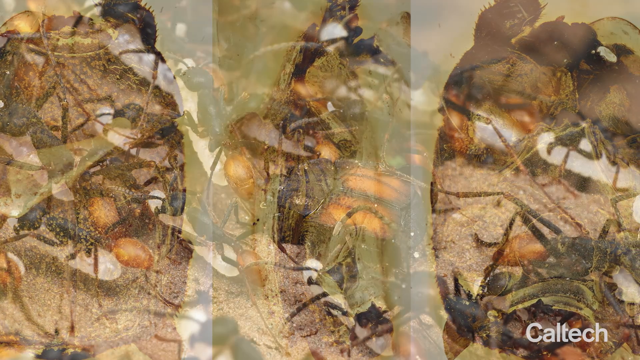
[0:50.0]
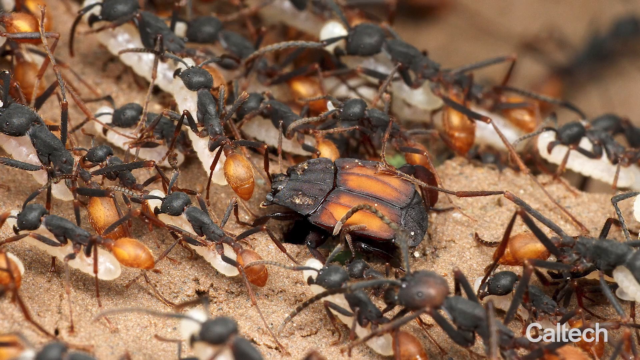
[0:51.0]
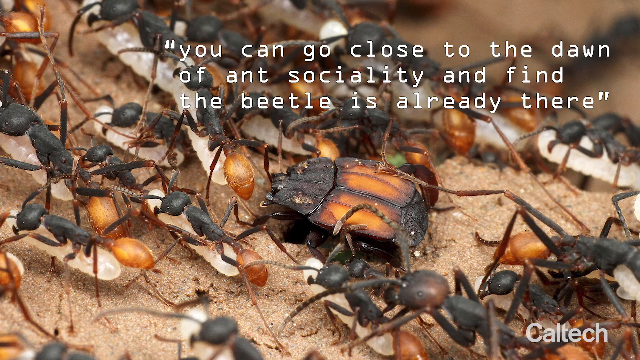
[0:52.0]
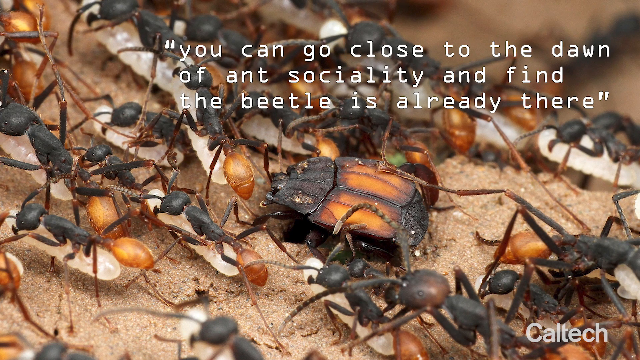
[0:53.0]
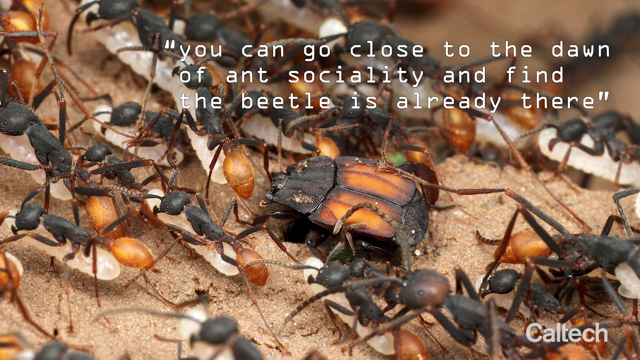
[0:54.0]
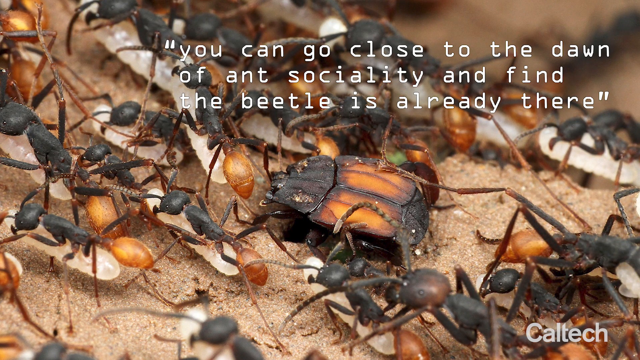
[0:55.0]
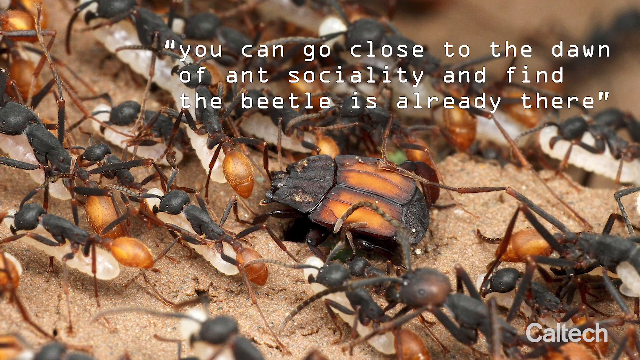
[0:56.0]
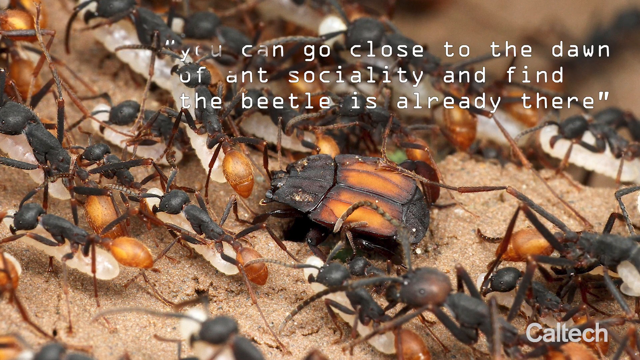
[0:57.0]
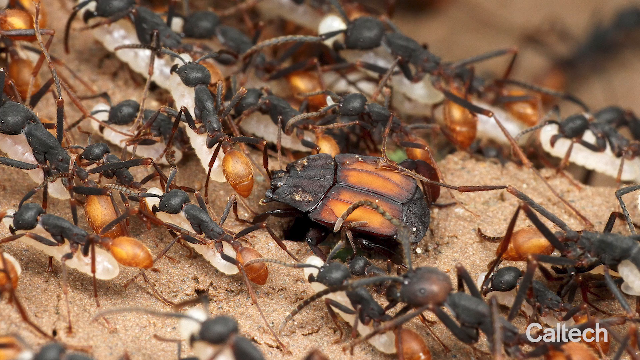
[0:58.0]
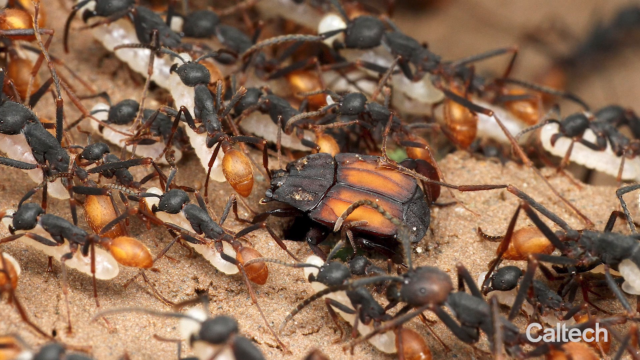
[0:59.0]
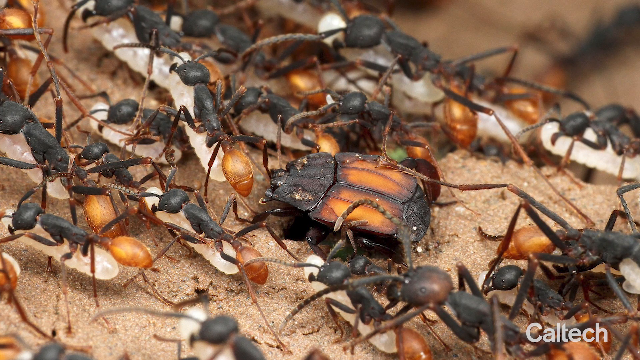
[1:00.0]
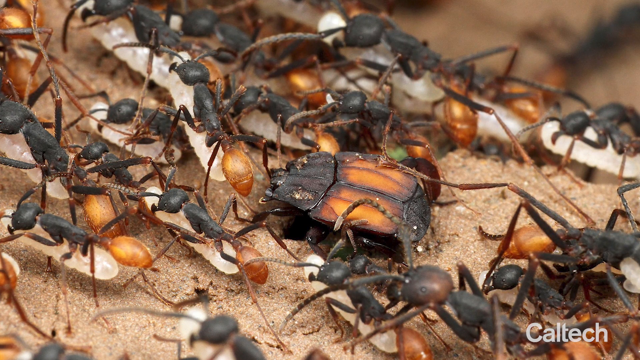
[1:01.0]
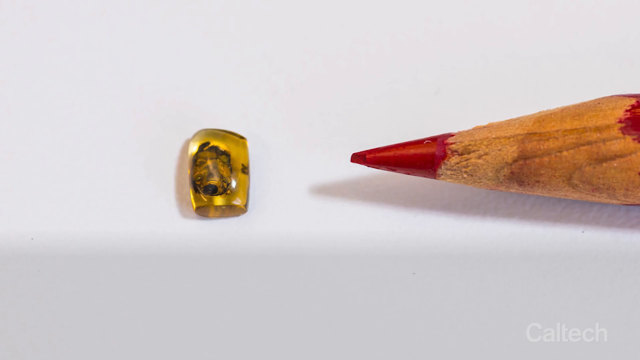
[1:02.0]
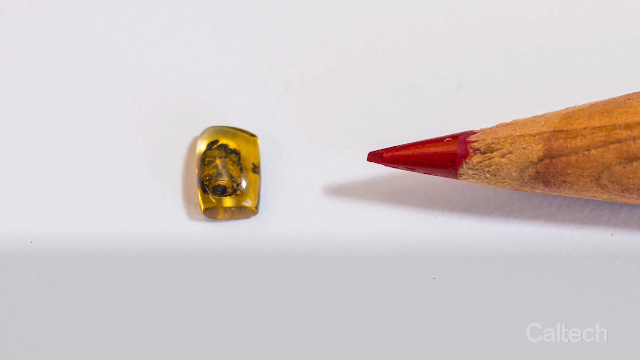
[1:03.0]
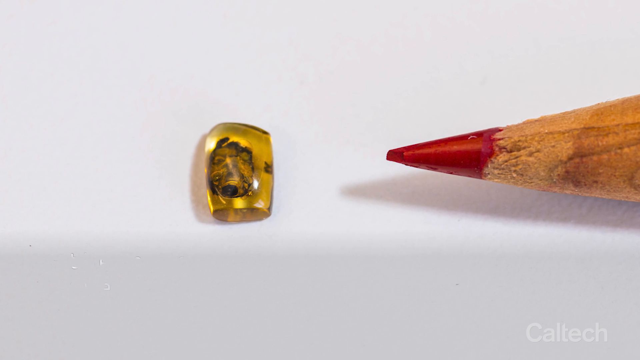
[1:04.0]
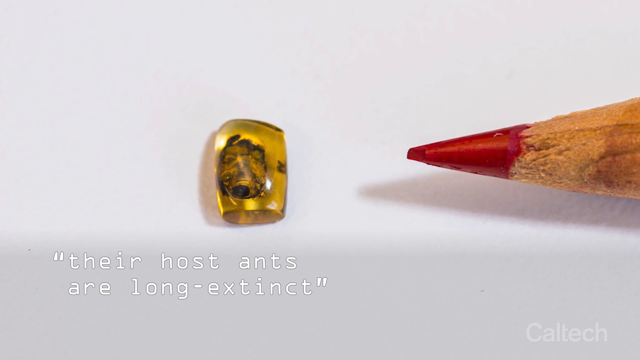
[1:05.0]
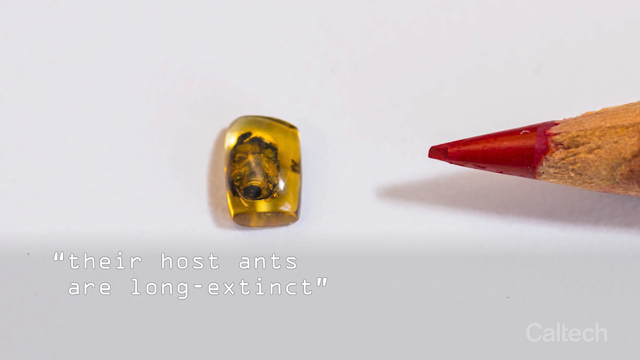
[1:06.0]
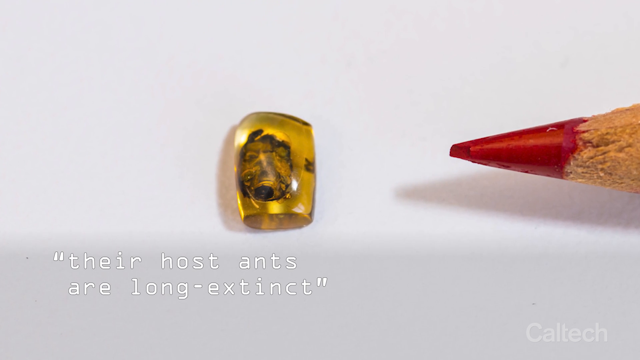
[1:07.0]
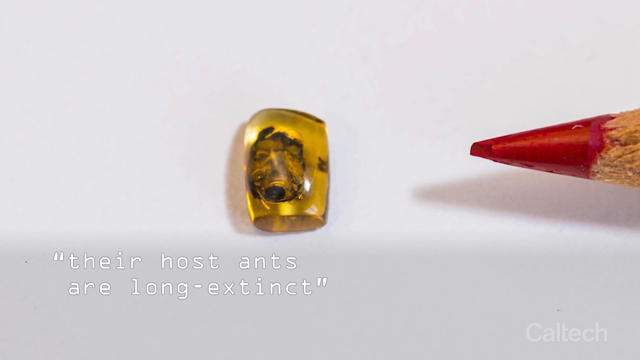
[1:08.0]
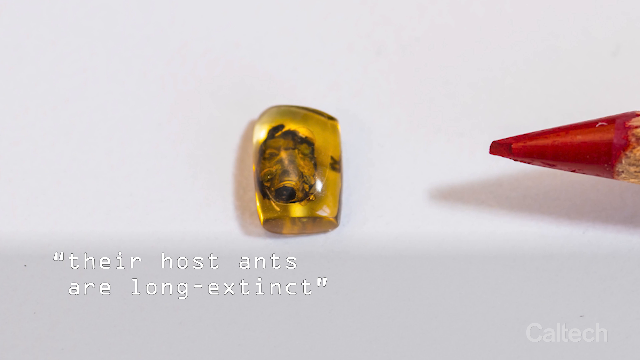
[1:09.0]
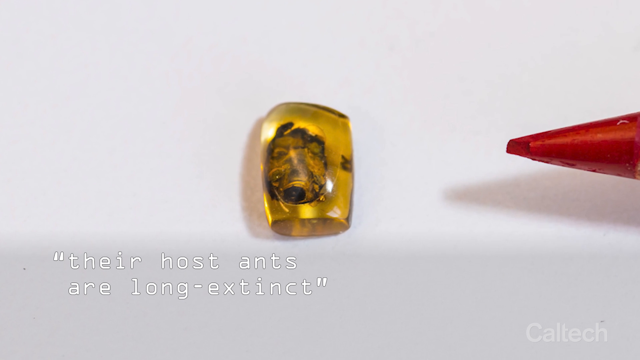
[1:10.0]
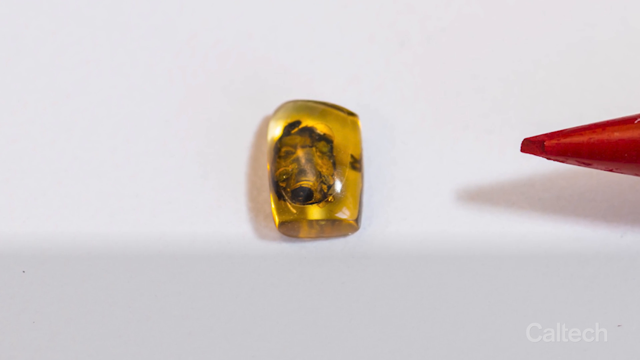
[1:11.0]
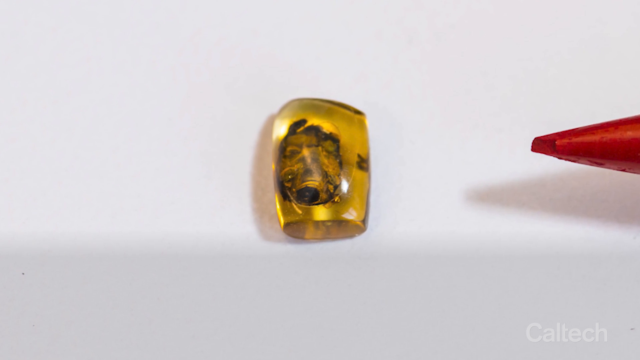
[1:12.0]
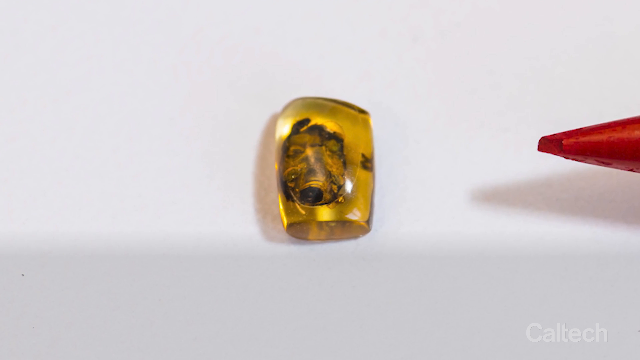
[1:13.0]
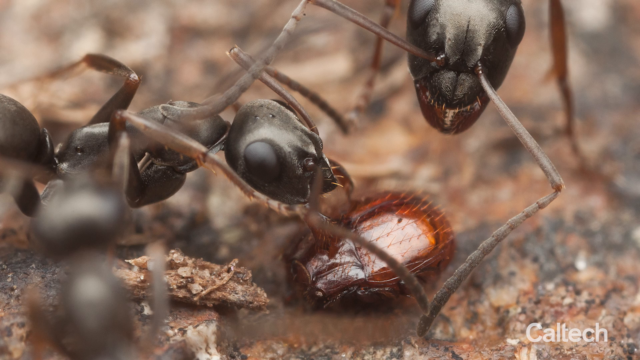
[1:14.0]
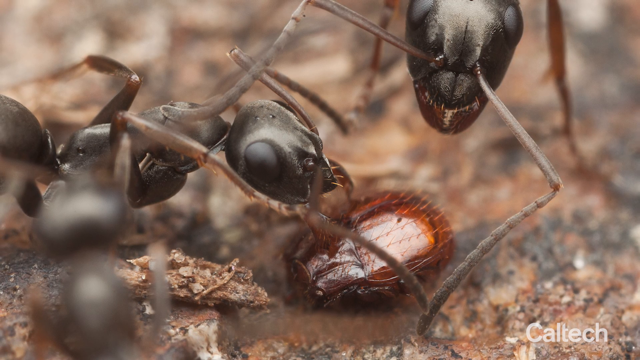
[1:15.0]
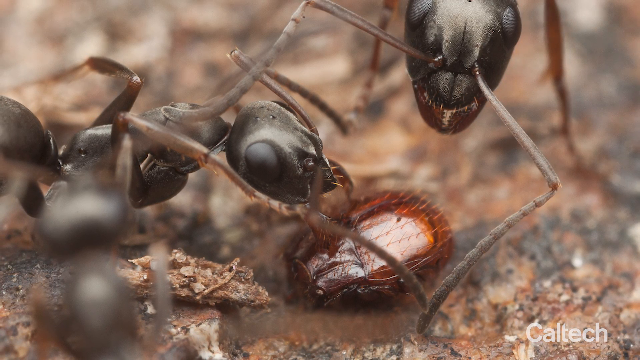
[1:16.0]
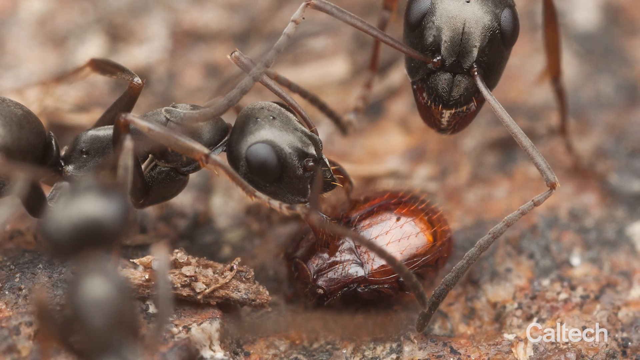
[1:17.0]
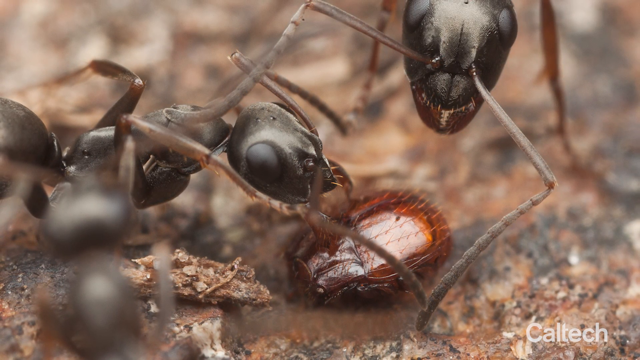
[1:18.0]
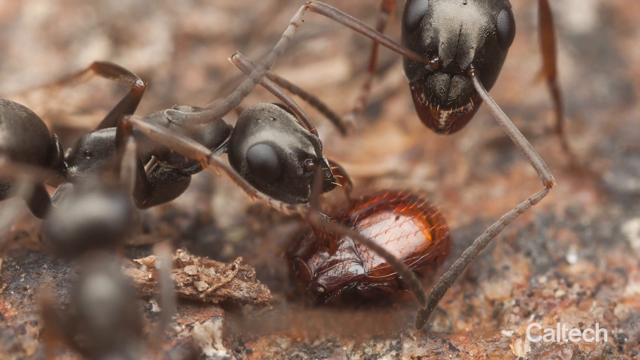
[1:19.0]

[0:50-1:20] The scene of the three vertical slides fades away to a still picture of many ants crawling over another creature, which might be a butterfly or moth; it is hard to tell. The ants seem to be marching from the right edge of the picture to the left, and the overall colors are yellow, black and tan. A quote appears in a white font in the upper right of the screen: "You can go close to the dawn of ant sociality and find the beetle is already there." The quote disappears and the view changes to another view of the piece of amber, lying on a white surface with the sharpened tip of a red pencil just to its right for scale. The piece of amber is barely longer than the pencil's lead tip, not counting the wood, apparently no more than a couple of millimeters on each side. A call-out caption beginning "Their host ants are long" appears. Then a close-up photograph shows ants molesting a piece of amber on the dirt.